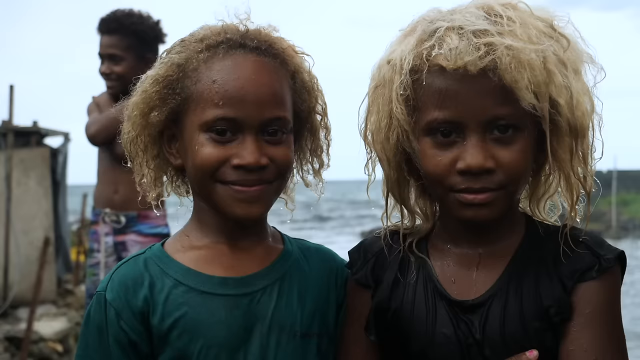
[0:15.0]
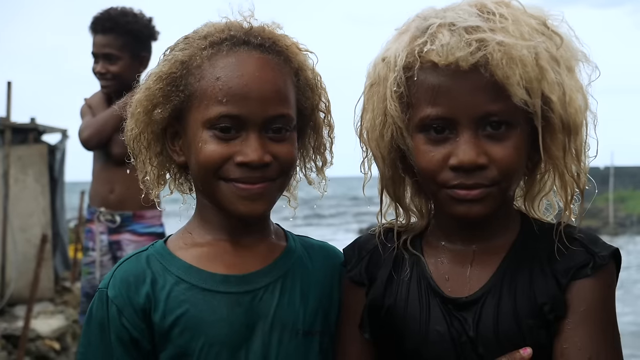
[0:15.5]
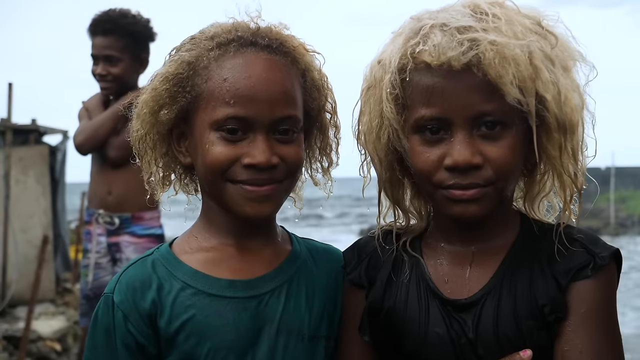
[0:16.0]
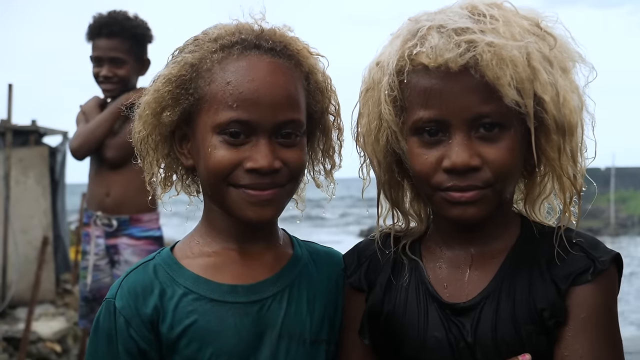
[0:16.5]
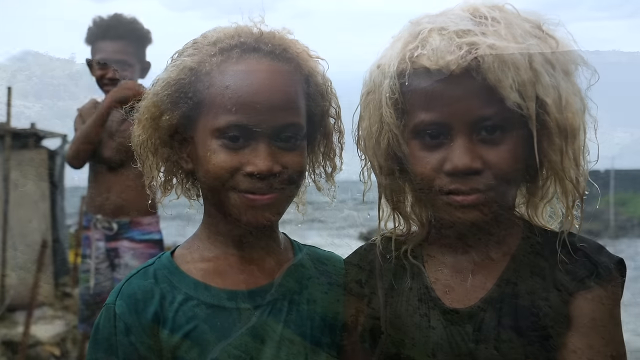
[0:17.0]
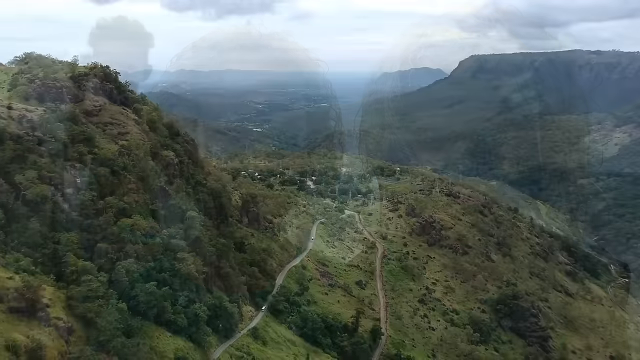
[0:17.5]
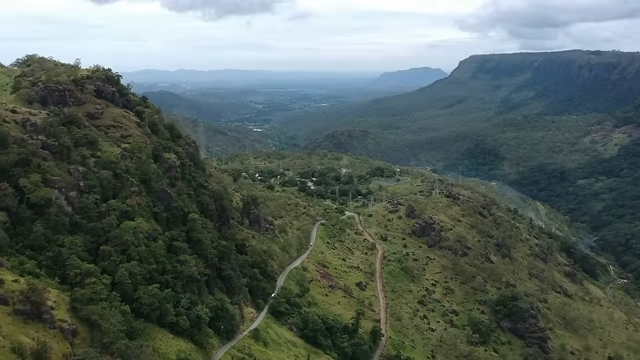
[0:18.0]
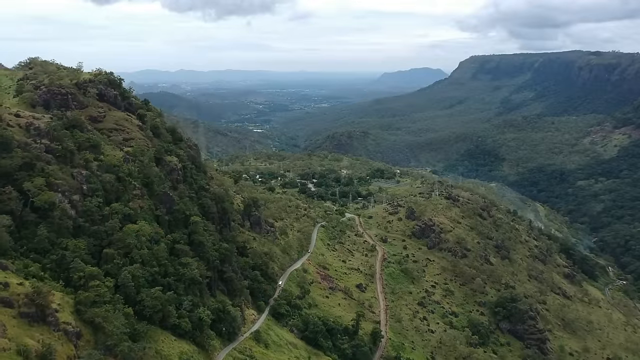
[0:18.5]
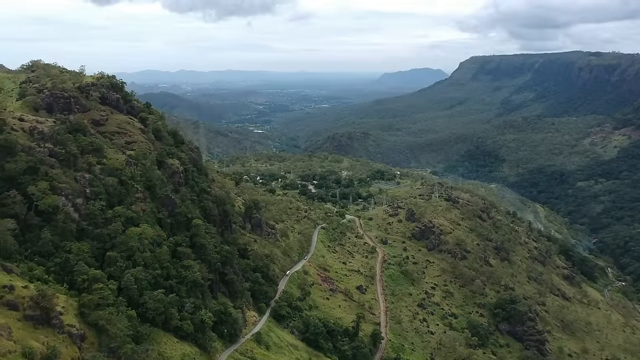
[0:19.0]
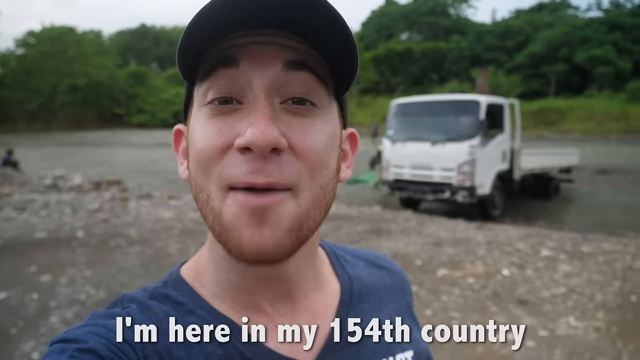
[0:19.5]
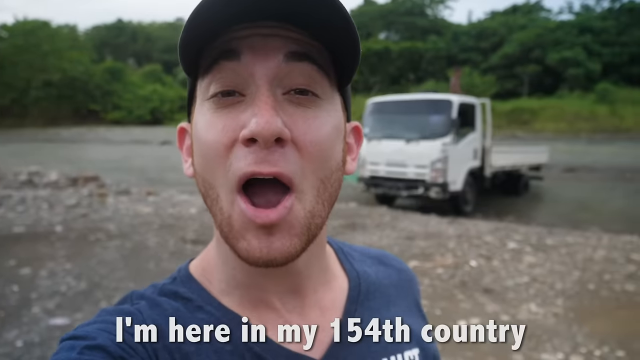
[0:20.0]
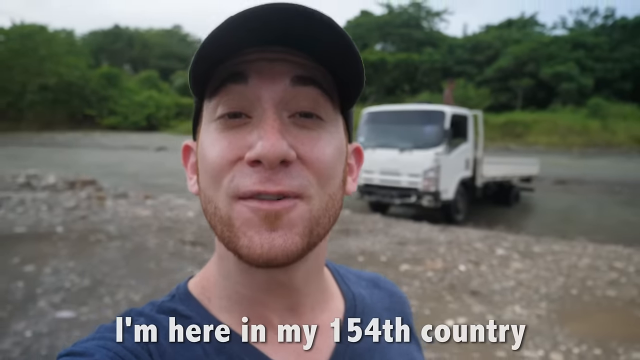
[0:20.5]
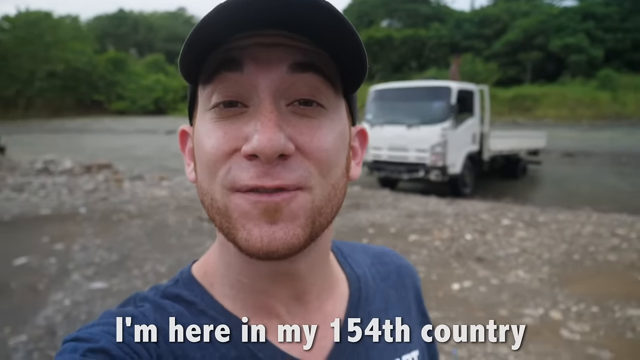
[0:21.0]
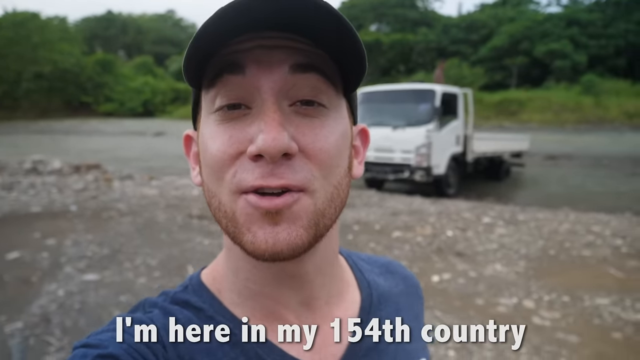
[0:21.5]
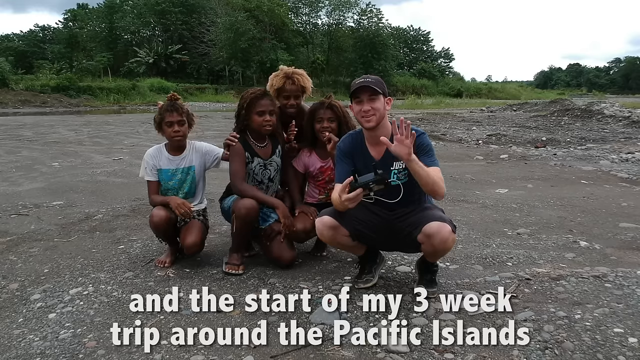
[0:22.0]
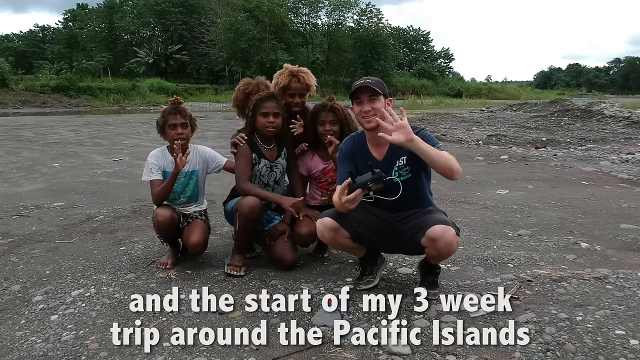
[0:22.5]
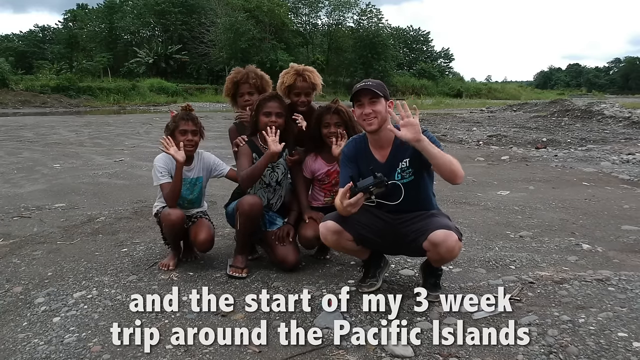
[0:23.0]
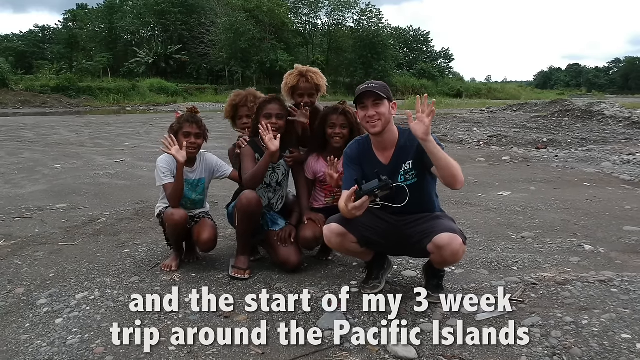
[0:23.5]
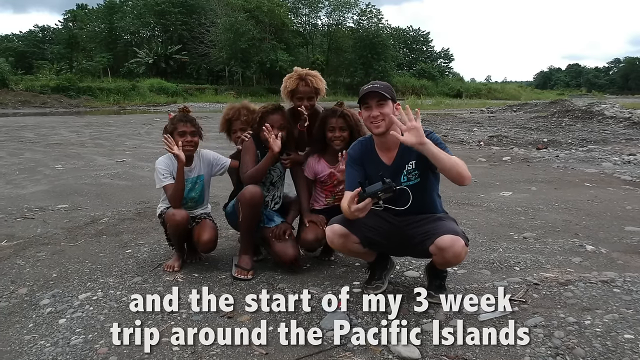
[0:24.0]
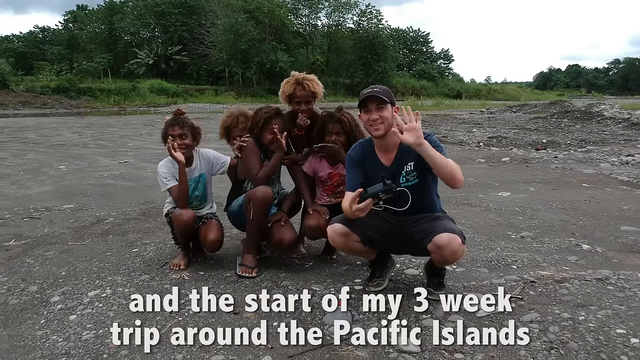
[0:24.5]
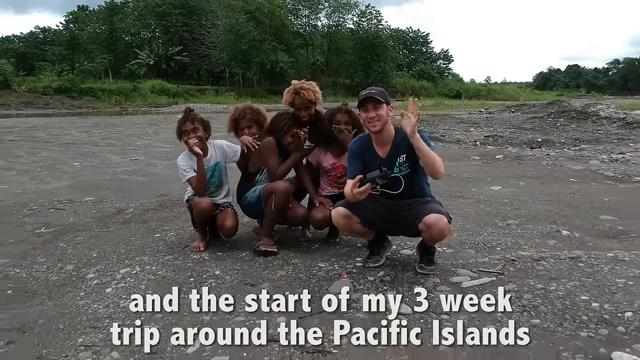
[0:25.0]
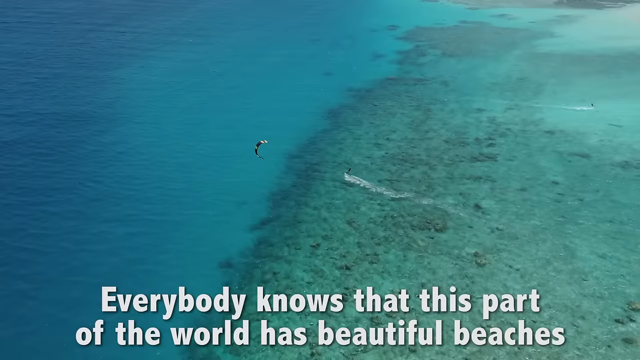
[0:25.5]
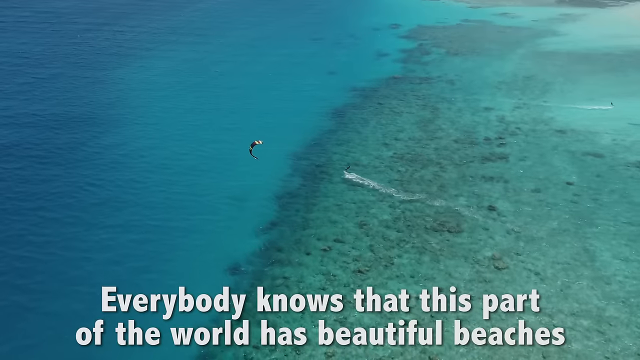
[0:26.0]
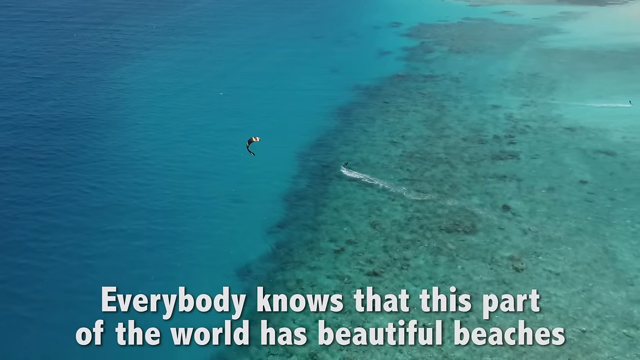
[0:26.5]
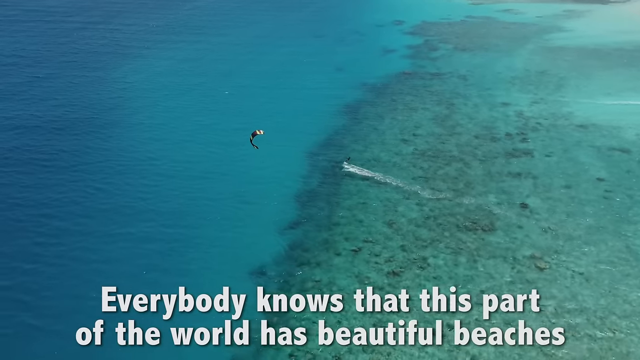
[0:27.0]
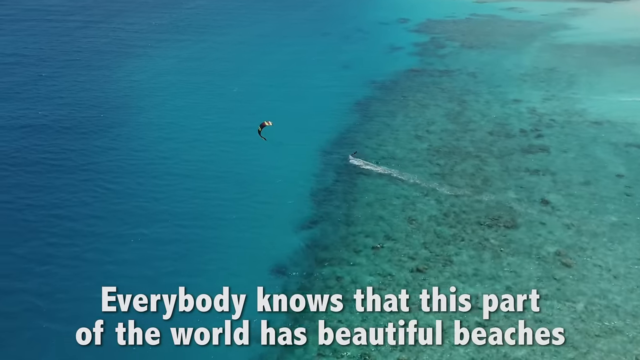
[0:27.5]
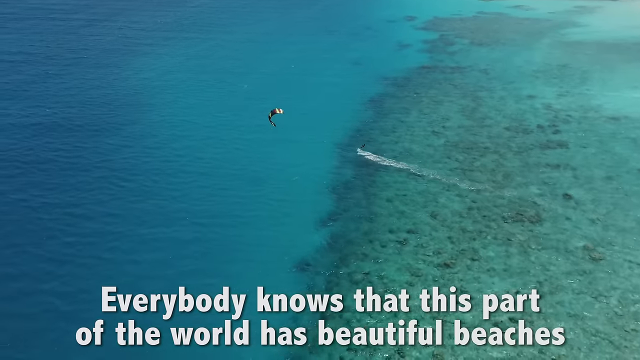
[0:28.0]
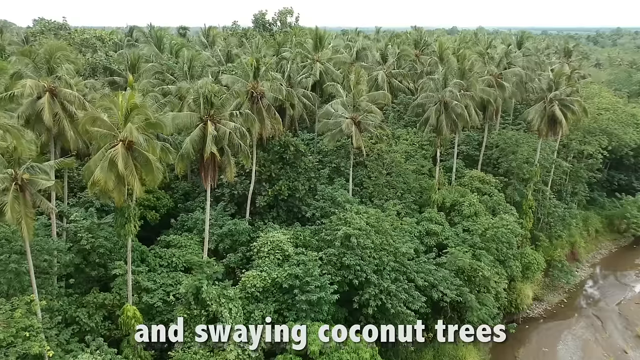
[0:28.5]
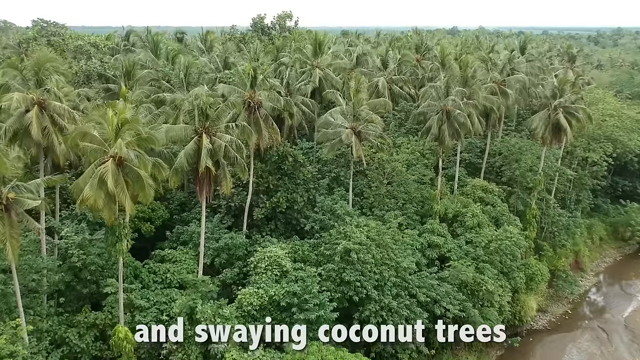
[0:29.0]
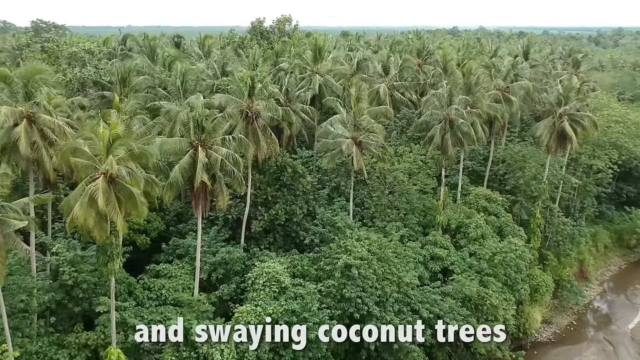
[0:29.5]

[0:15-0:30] Two girls with blonde hair appear, followed by the man narrating the video. People wave as the video moves into the next scene.